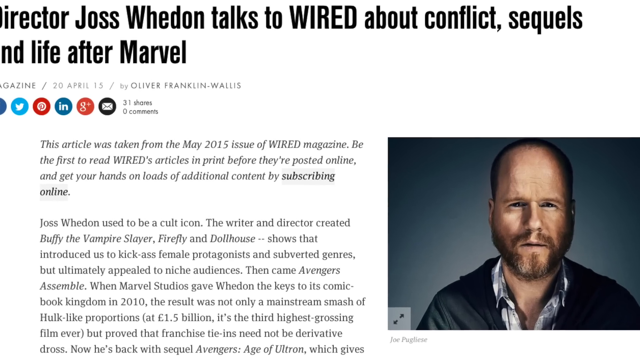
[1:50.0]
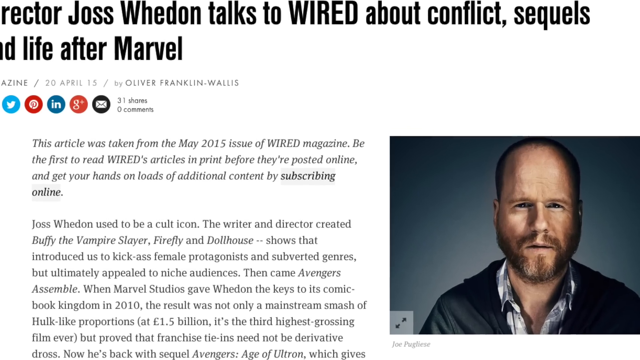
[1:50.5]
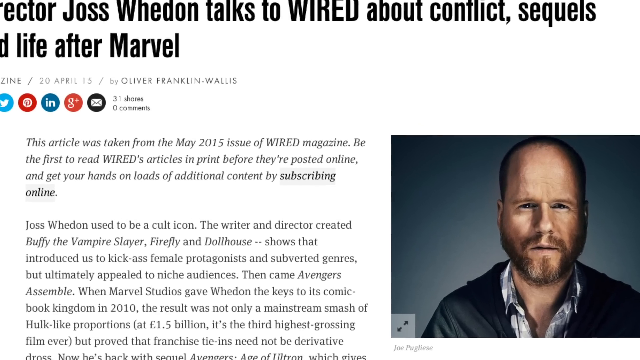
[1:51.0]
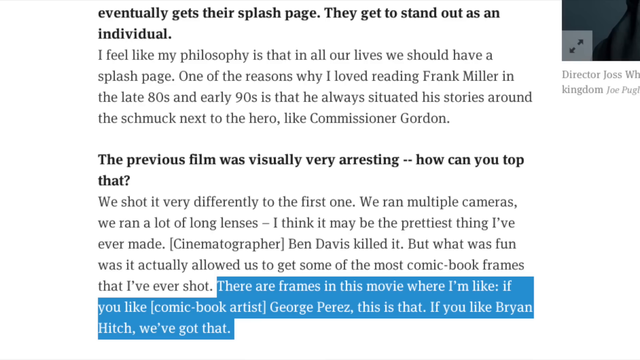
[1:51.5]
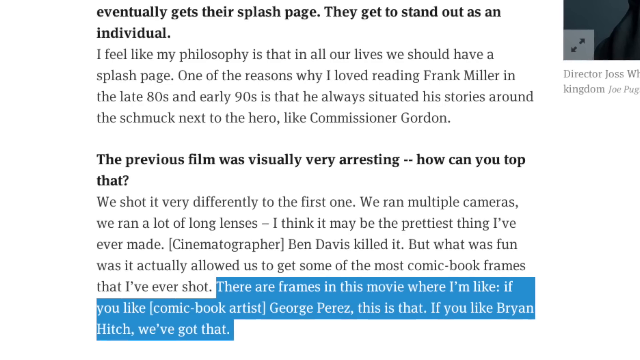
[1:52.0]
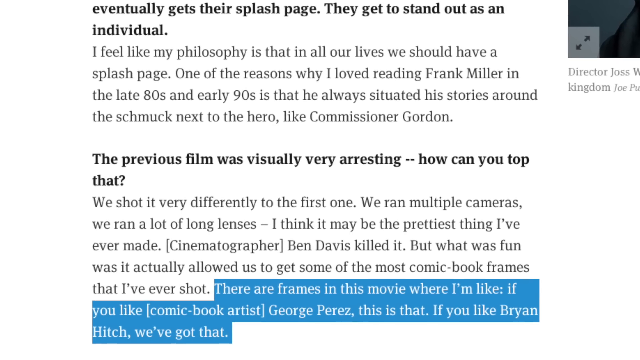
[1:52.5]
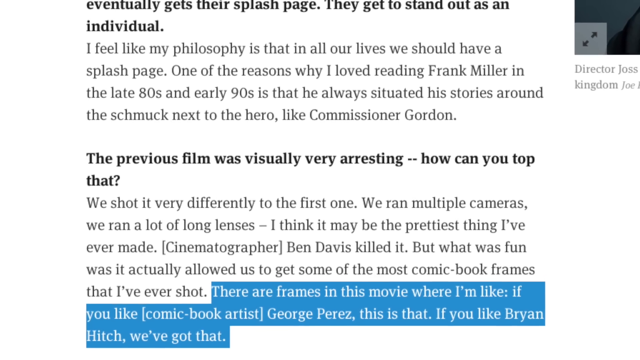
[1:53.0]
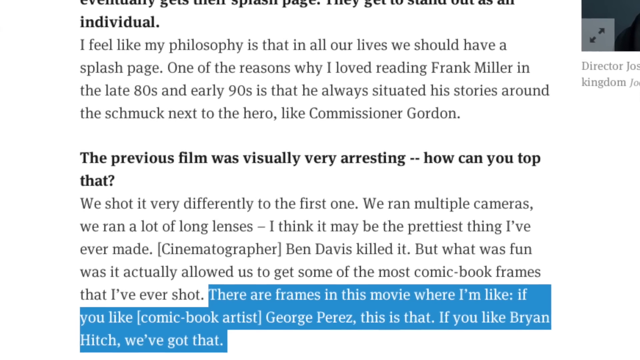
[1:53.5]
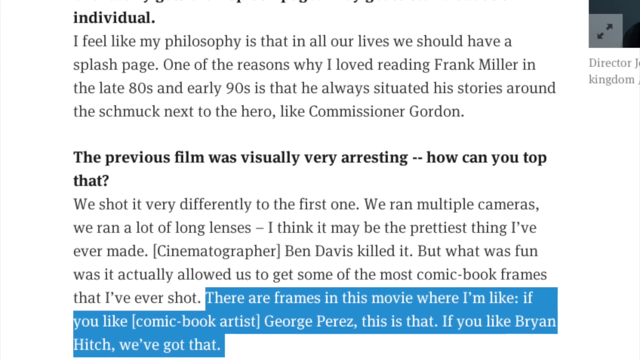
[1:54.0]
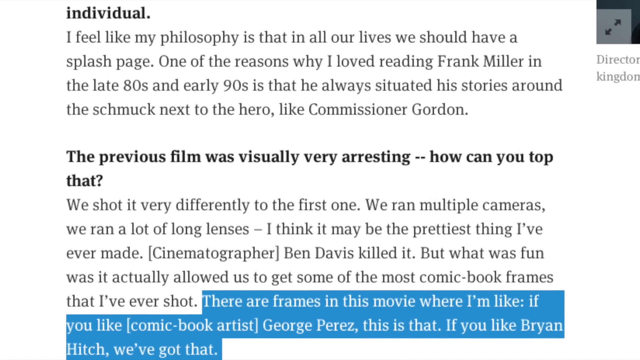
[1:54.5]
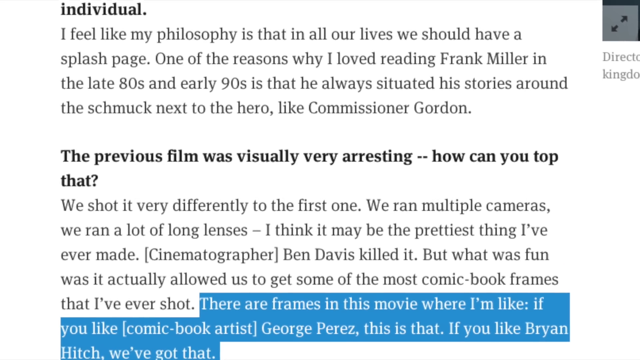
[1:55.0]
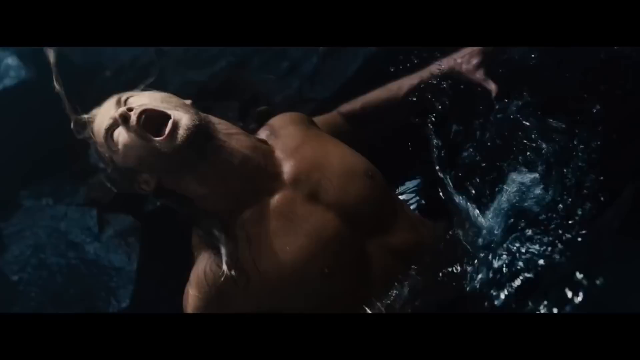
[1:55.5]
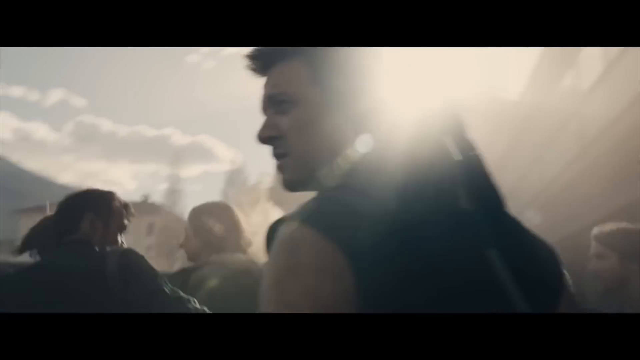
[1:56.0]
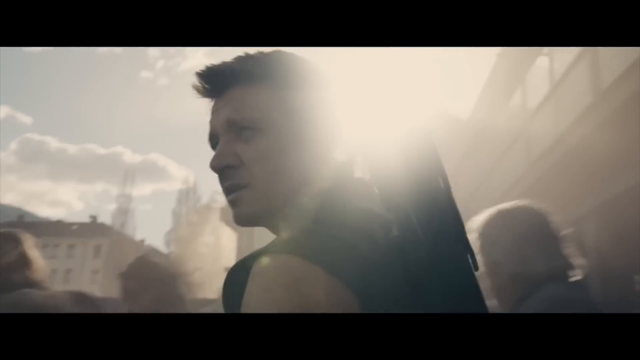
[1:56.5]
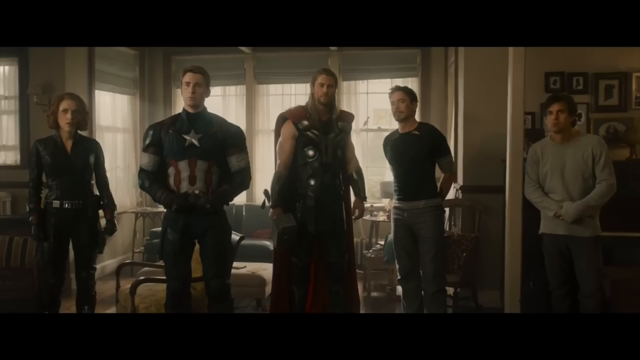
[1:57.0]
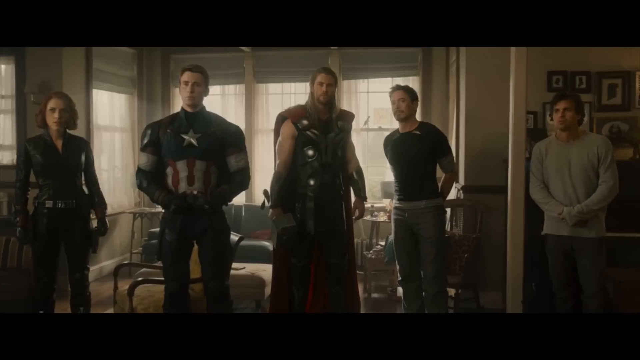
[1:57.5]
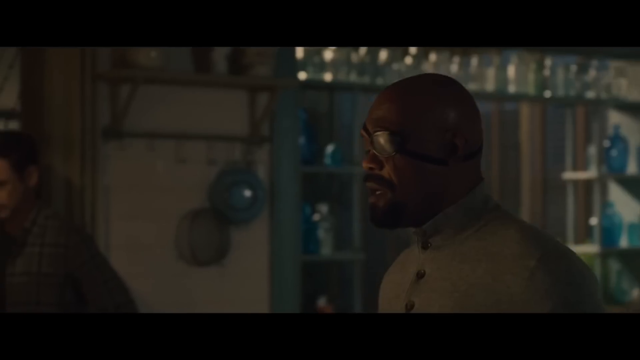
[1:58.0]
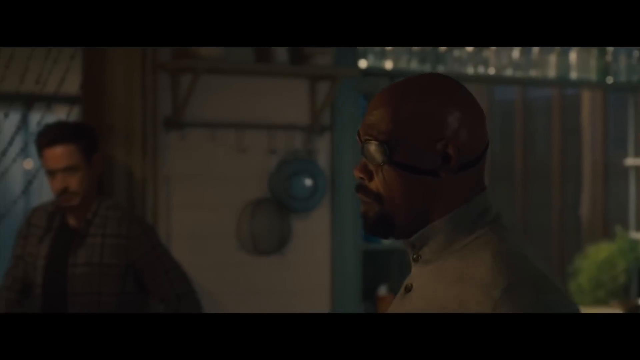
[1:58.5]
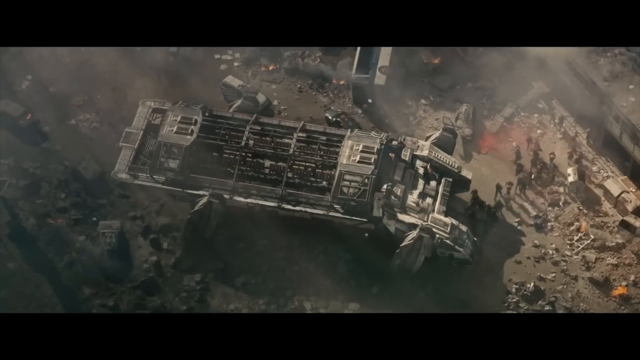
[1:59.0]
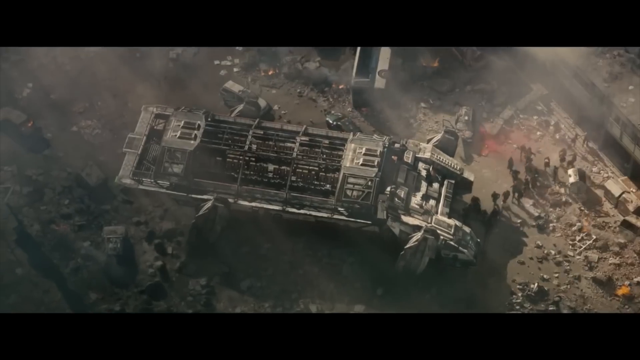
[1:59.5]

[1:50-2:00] An article shows director Josh Whedon talking to Wired; the article was published in 2015 by Wired. More of the article follows, with bold text reading "eventually they get a splash page" and what looks to be a direct quote from director Josh reading "as far as I've learned my philosophy is that in all our lives we should have a splash page", followed by more of his opinion. The video then cuts back to Avengers scenes showing Thor in distress, and some of the earlier scenes play again.